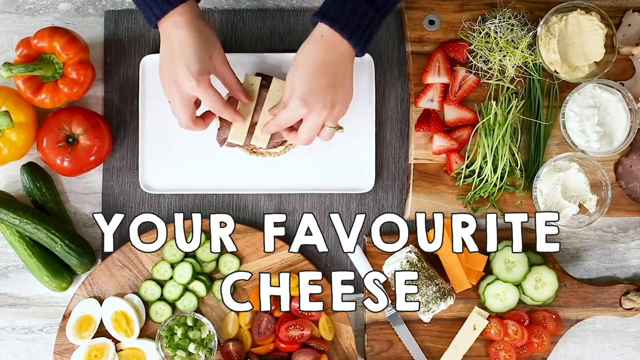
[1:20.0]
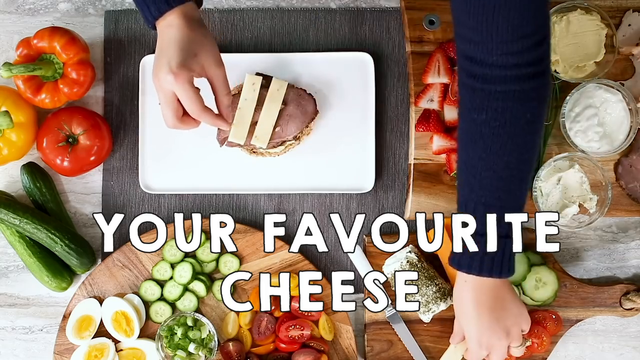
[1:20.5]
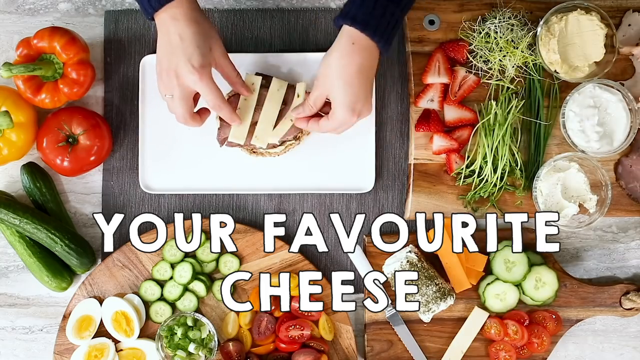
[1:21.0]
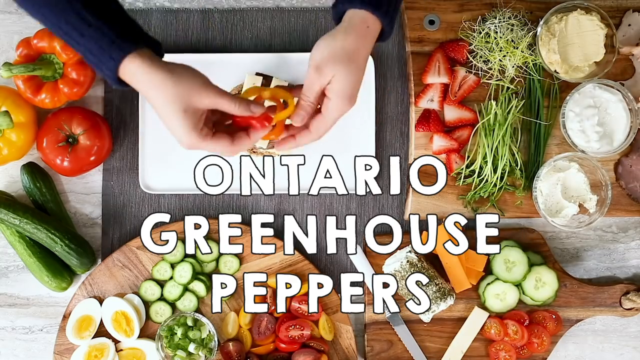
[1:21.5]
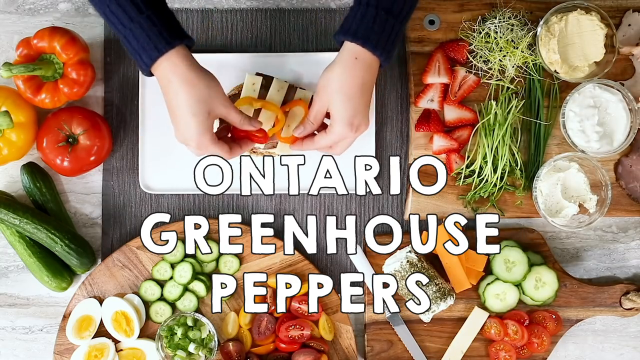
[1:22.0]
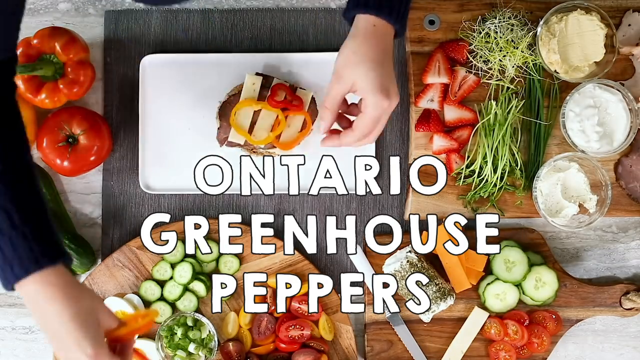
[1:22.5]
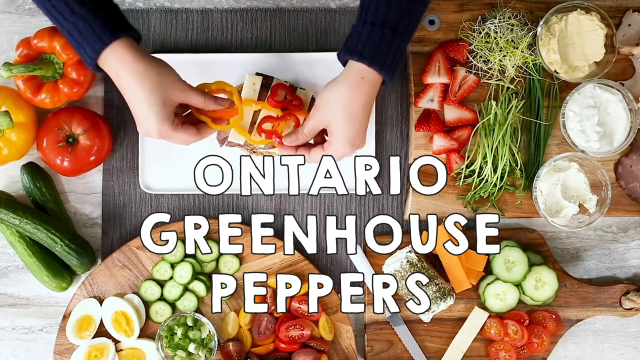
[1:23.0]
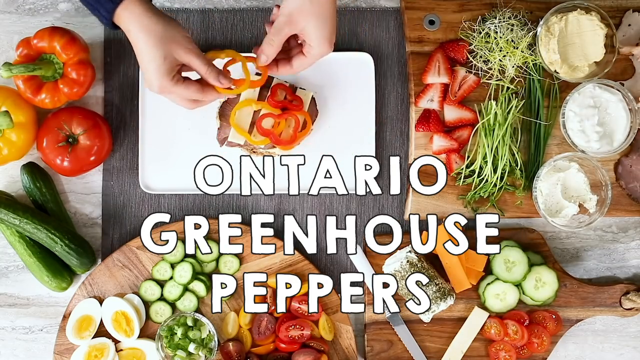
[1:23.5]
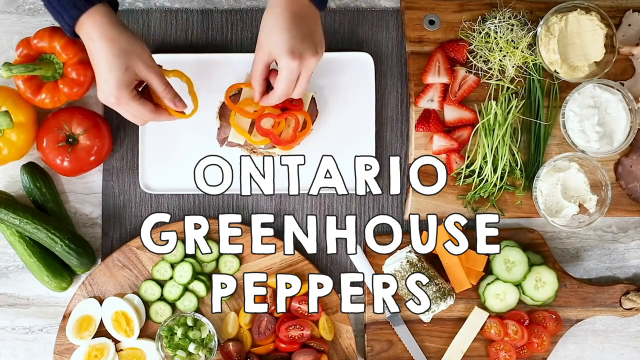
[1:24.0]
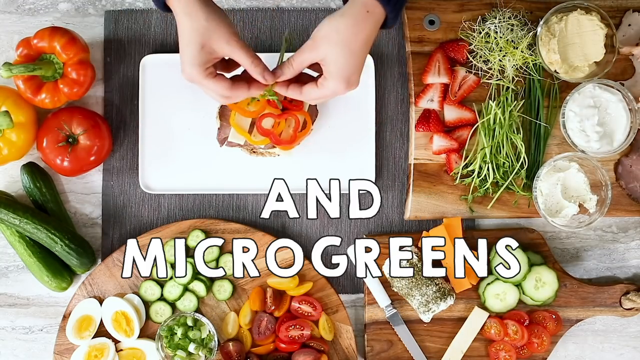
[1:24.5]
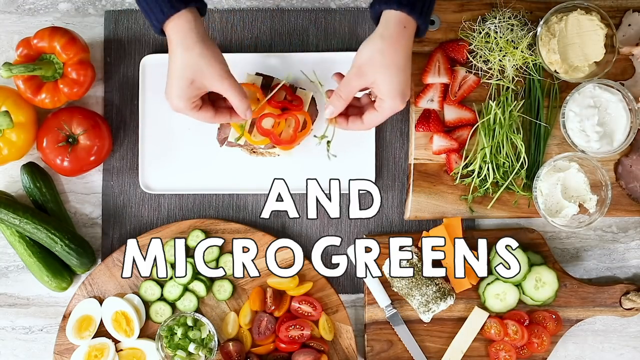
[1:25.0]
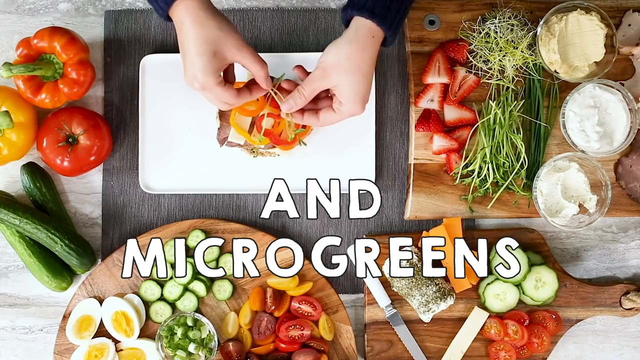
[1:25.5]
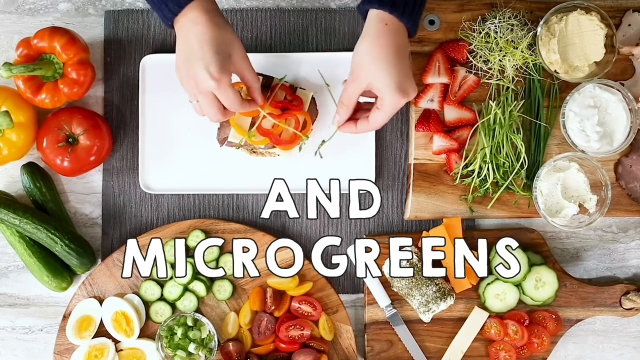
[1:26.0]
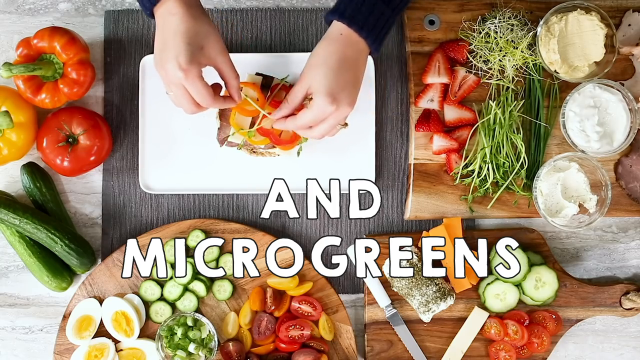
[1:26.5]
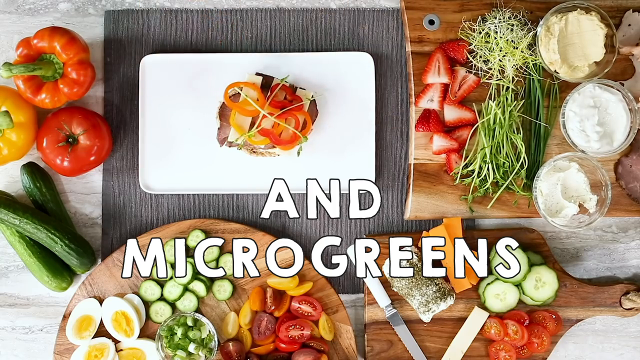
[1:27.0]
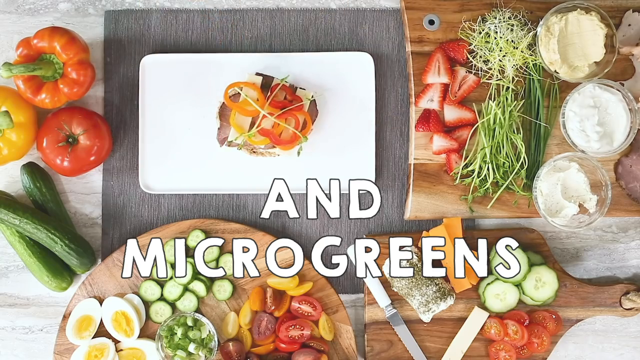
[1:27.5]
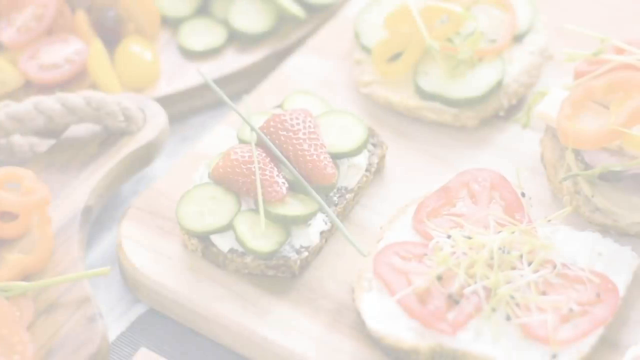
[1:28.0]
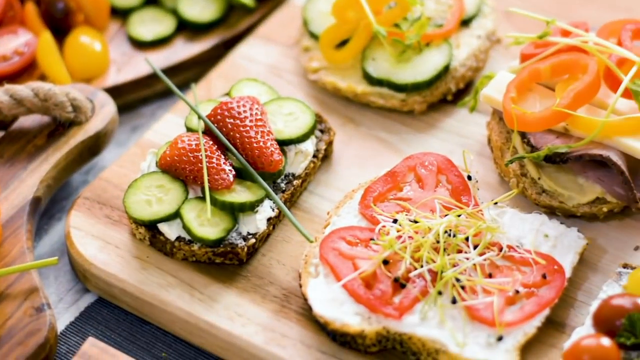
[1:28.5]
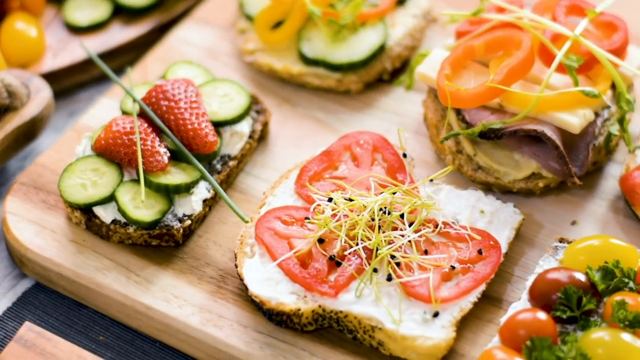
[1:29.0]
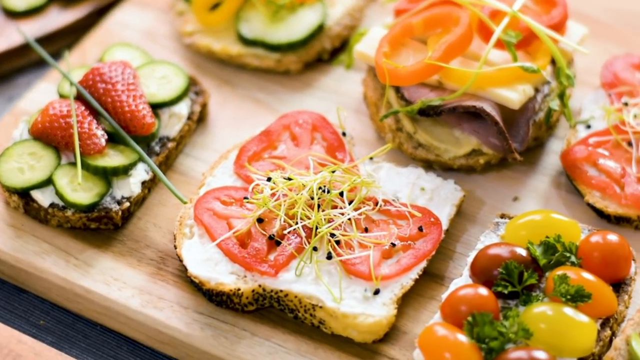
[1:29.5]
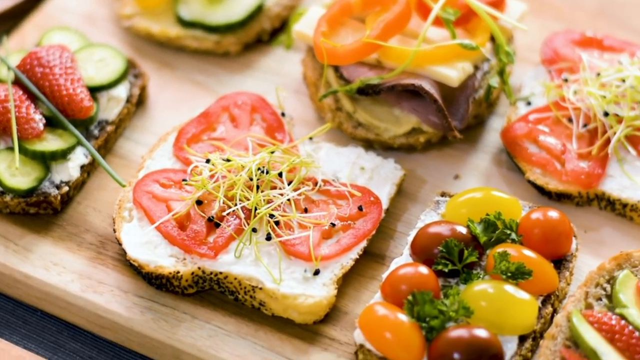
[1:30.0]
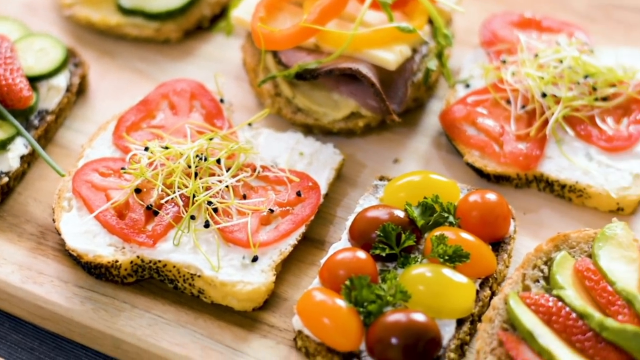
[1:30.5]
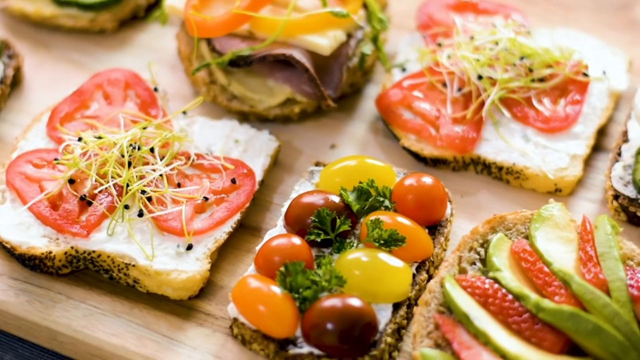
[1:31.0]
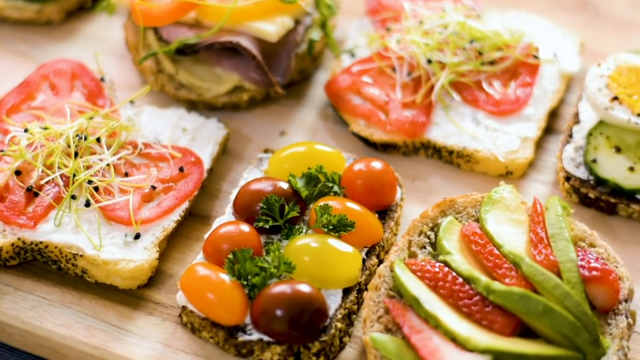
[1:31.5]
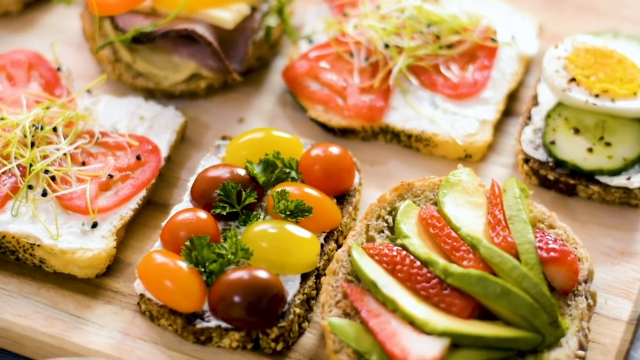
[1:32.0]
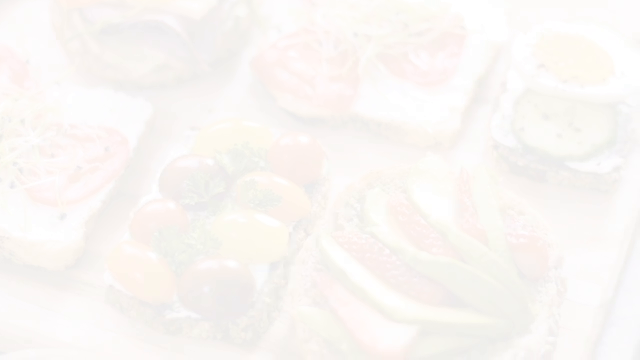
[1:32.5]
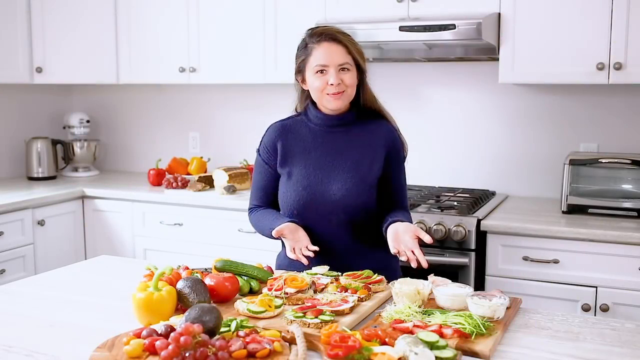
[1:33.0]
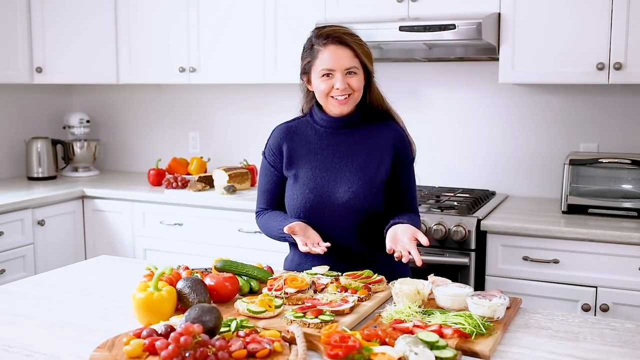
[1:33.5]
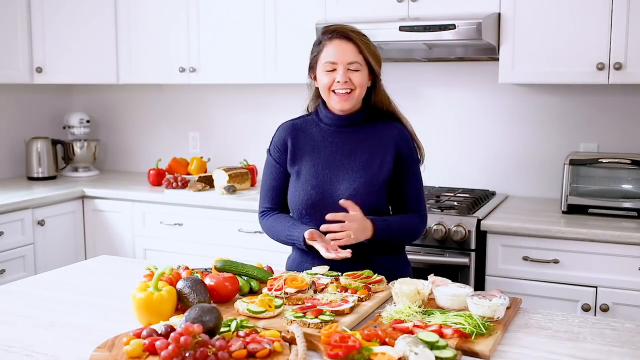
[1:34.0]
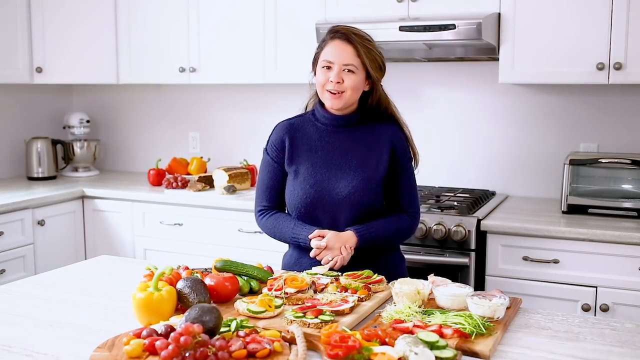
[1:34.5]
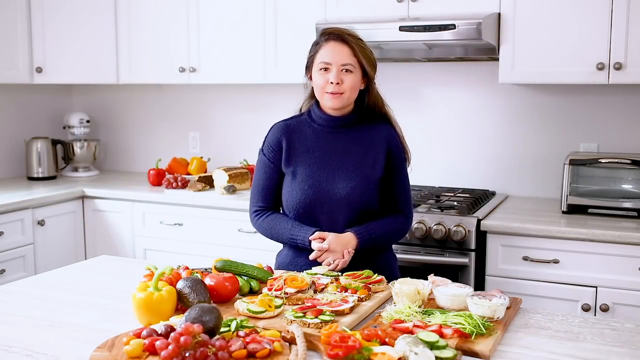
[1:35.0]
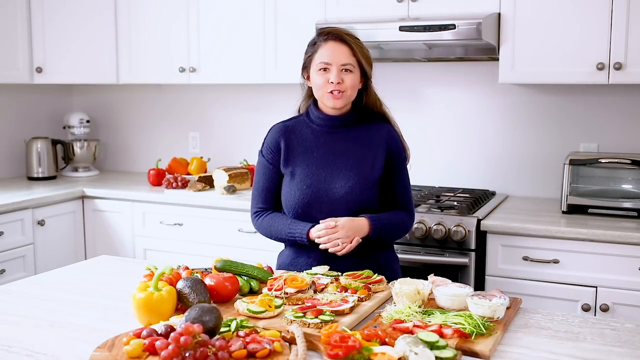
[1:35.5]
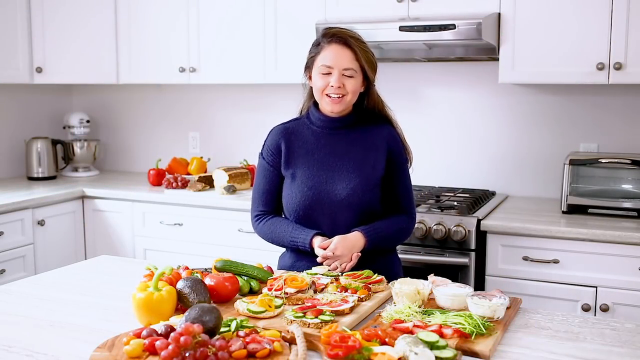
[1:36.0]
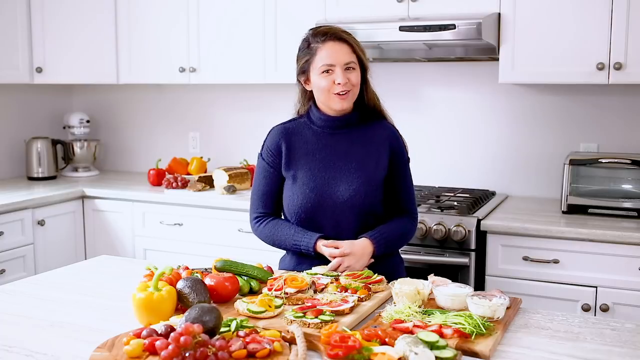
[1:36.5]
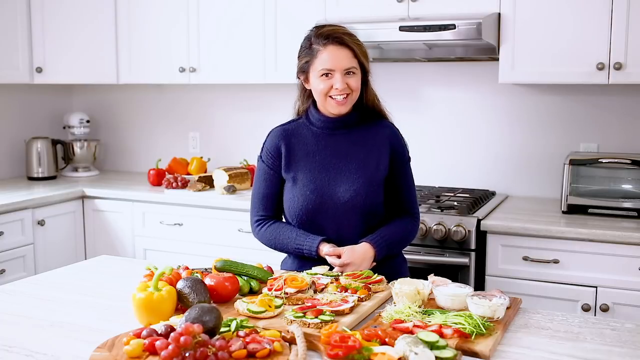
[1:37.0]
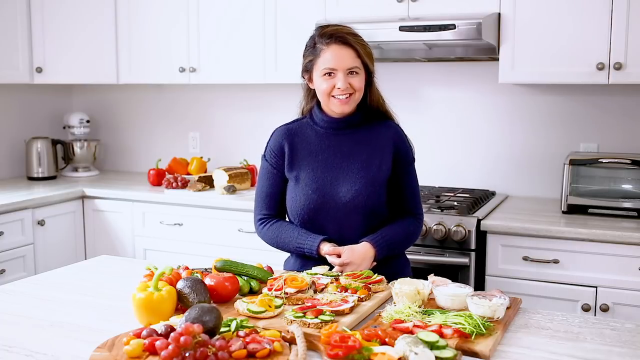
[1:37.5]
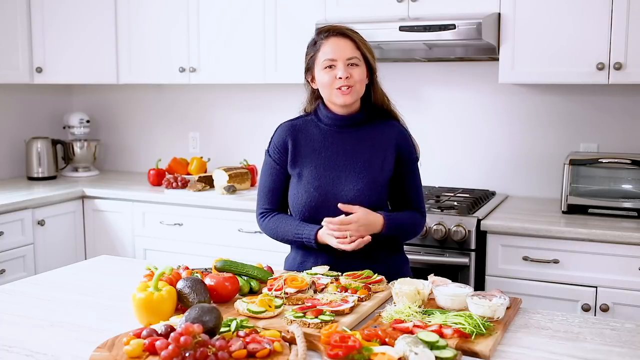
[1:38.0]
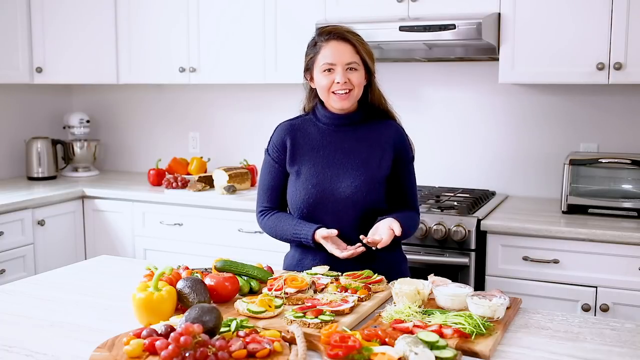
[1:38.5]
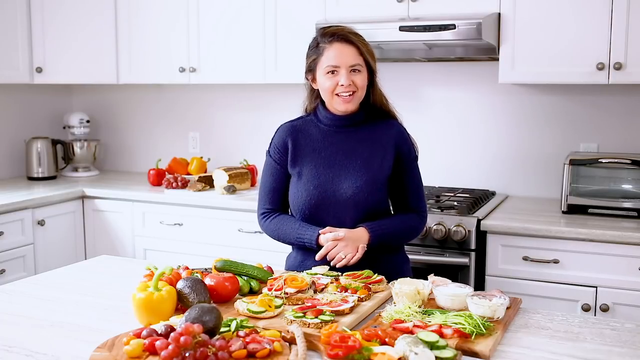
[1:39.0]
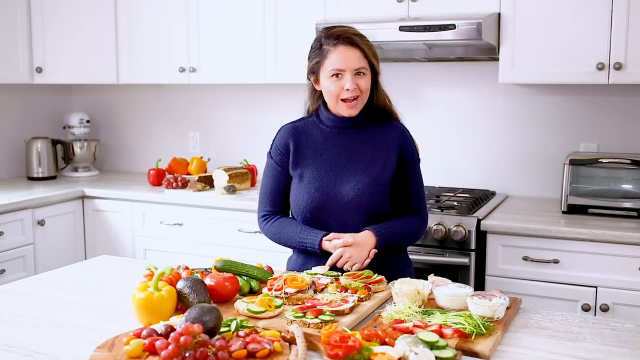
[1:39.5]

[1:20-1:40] The favorite cheese is added on the roast beef, then Ontario greenhouse pepper is added, followed by micro greens. The camera zooms closely into the prepared sandwich. The video then returns to the woman facing the camera in the kitchen, giving detailed information, with everything she prepared assembled on the chopping board.